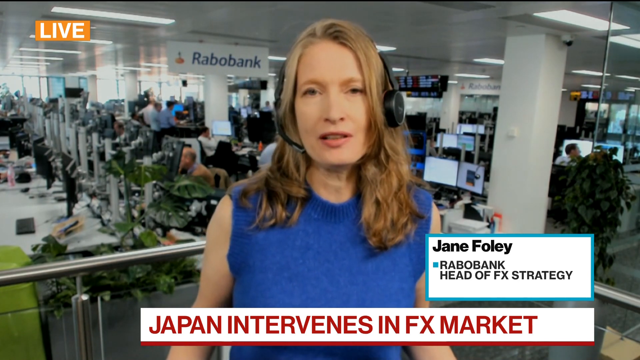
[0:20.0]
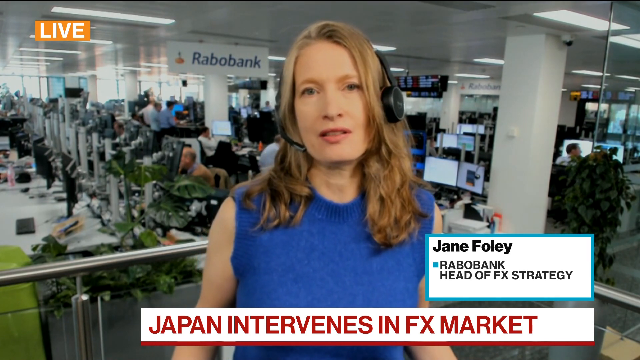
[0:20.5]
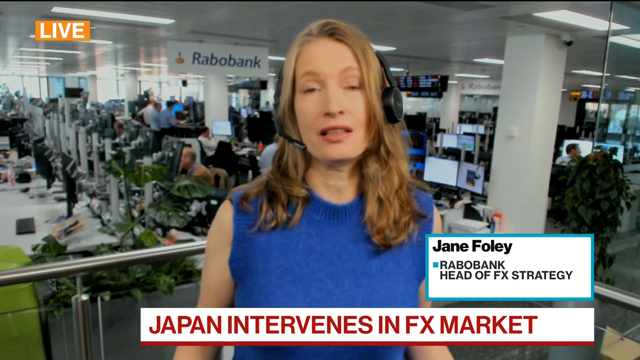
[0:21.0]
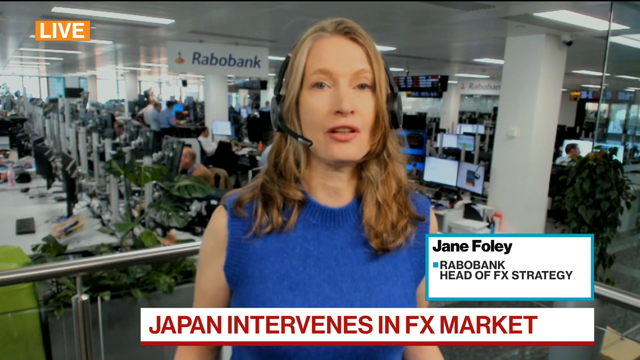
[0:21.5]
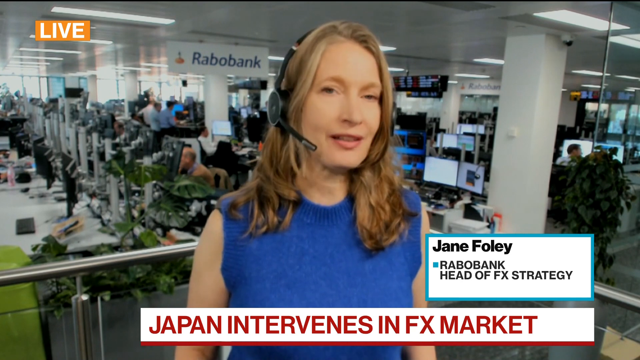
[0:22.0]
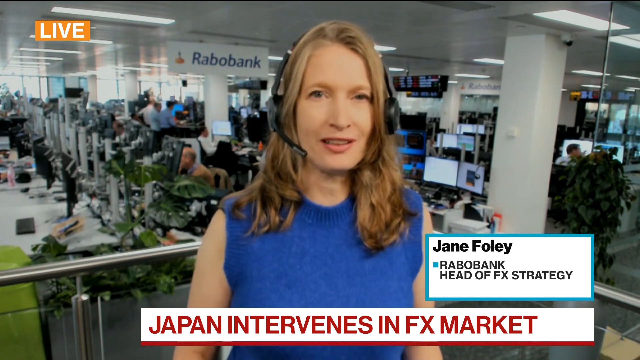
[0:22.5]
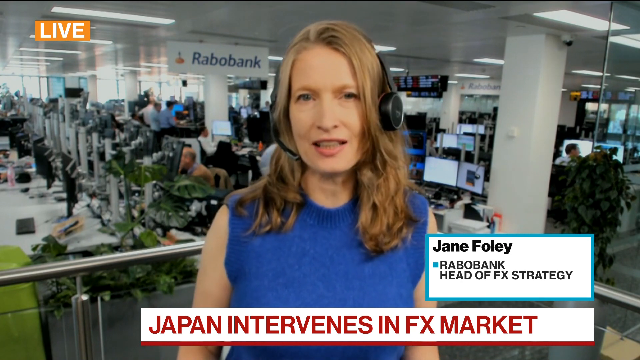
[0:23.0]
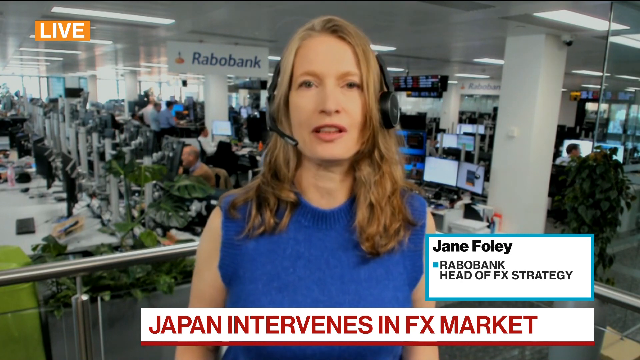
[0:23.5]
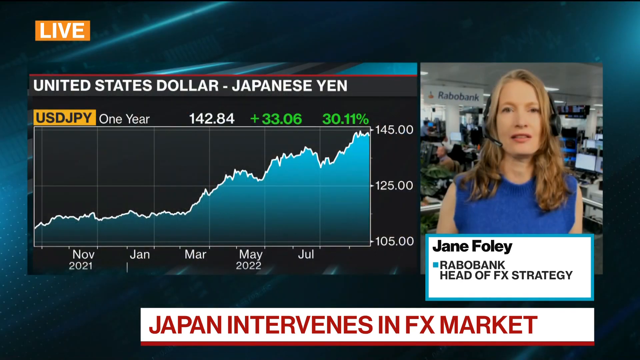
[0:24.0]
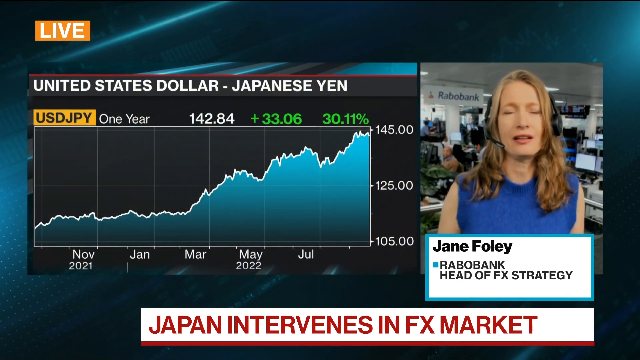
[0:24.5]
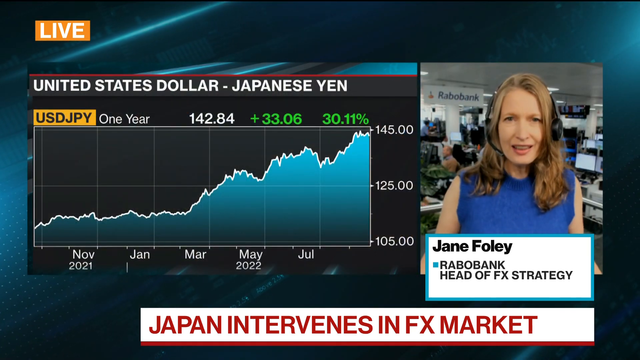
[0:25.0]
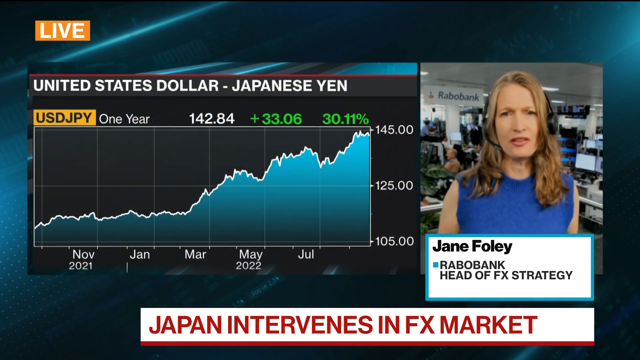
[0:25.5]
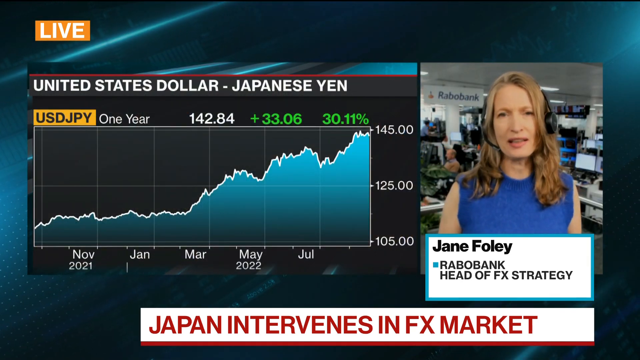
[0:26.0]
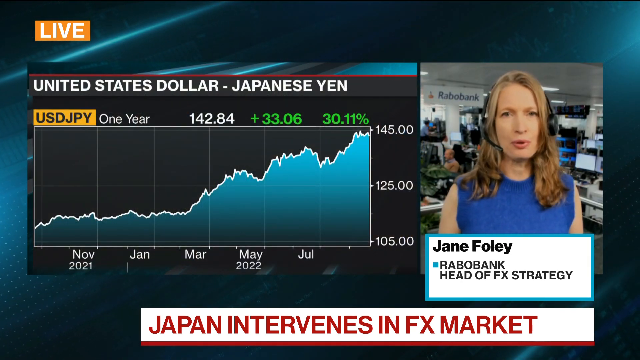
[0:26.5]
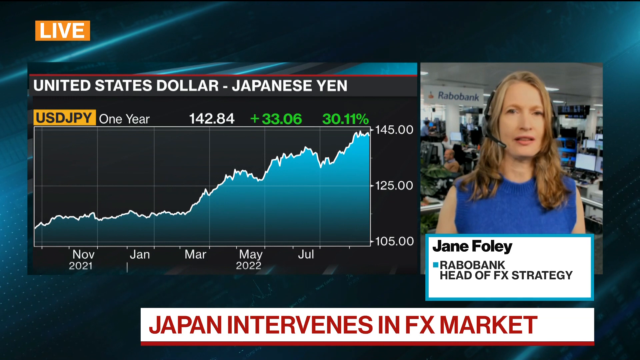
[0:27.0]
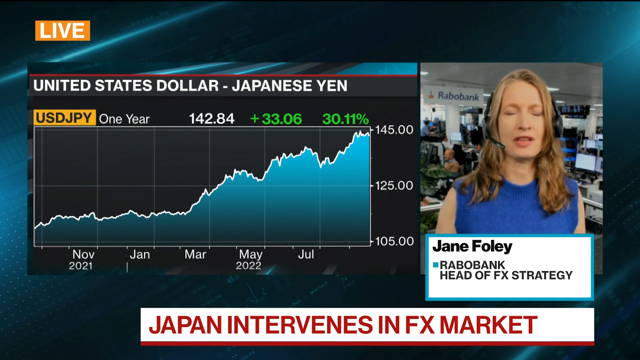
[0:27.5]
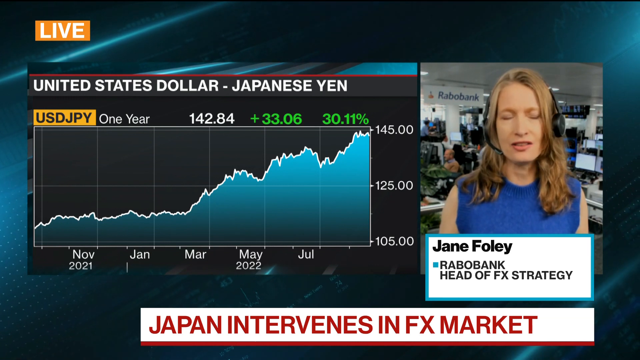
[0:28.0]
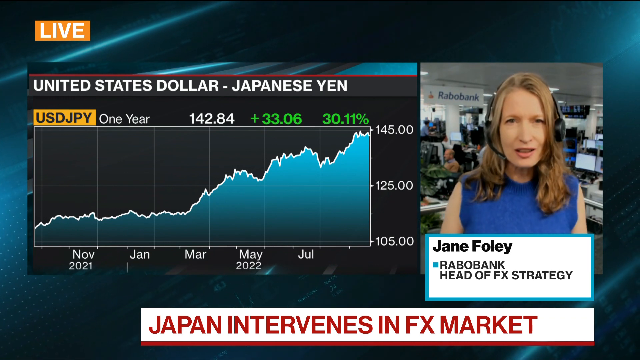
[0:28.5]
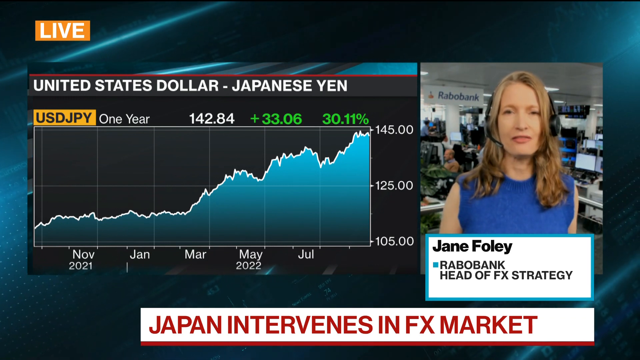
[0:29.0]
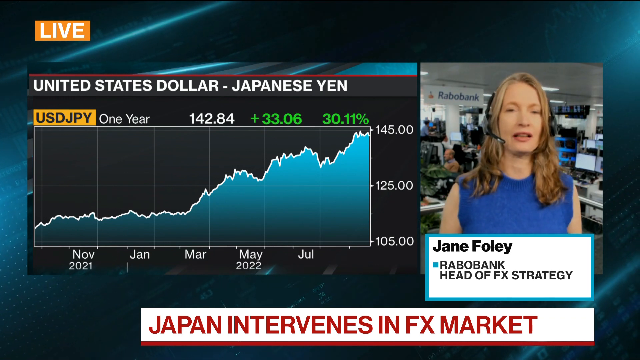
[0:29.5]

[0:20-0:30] The news story apparently concerns Japanese and United States currency and Japan's intervention in the FX market. It begins with a woman in her late 30s or early 40s on screen, wearing a headset. Her name is Jane Foley and her title is Rabobank Head of FX Strategy. She begins to speak, and then the screen zooms out: she is in a box on the right side of the screen, and on the left side is a chart showing a graph of the United States dollar versus the Japanese yen from November 2021 to July 2022. She looks to be speaking about the chart and, apparently, the effect Japan's intervention in the FX market is having on the currency.